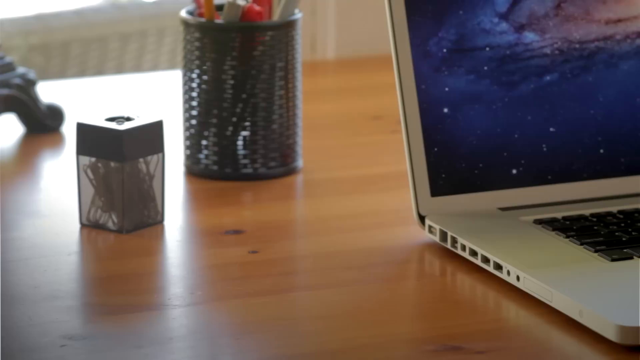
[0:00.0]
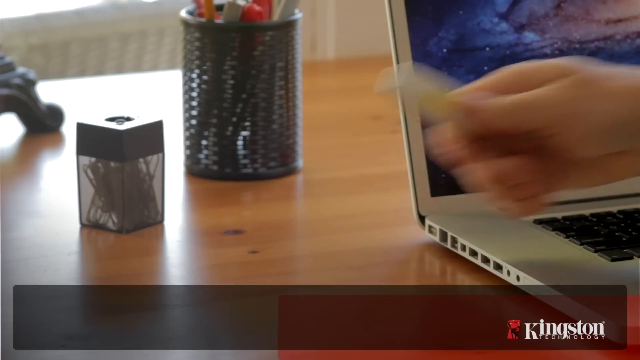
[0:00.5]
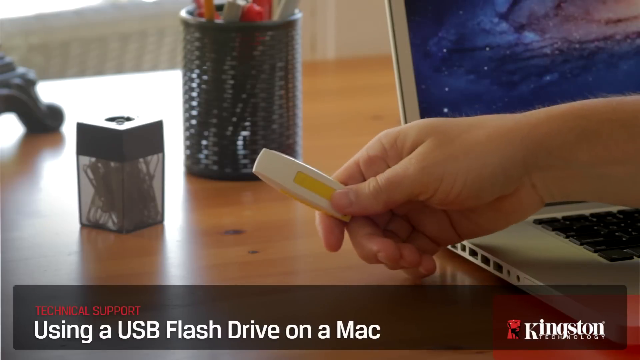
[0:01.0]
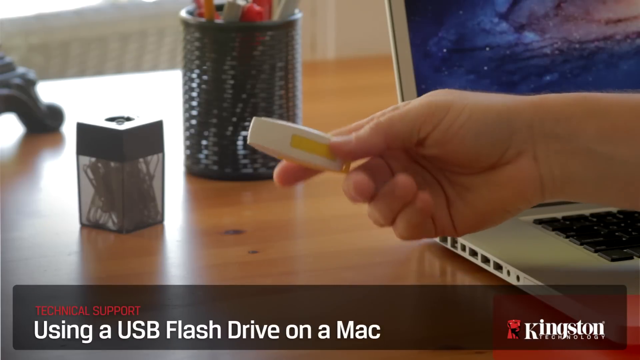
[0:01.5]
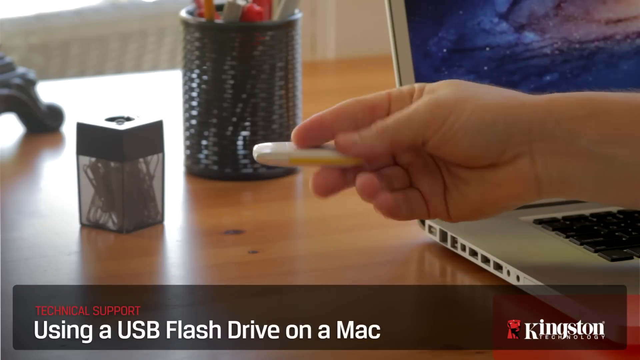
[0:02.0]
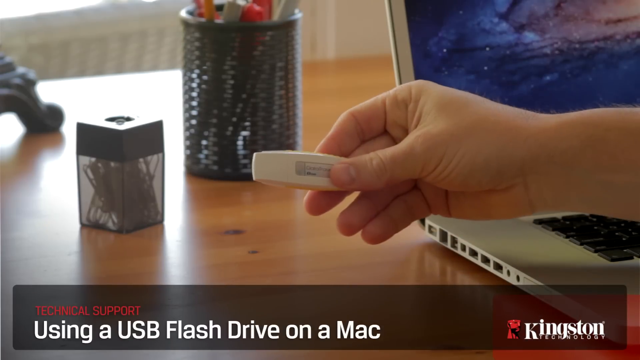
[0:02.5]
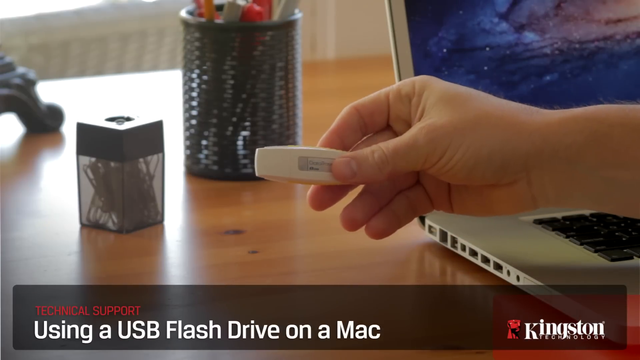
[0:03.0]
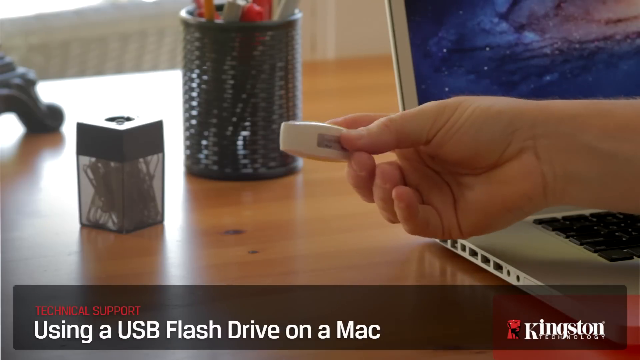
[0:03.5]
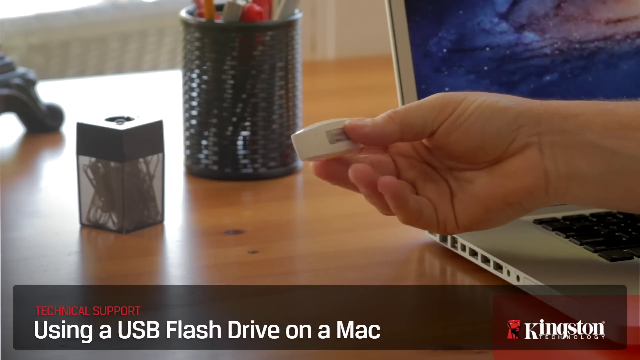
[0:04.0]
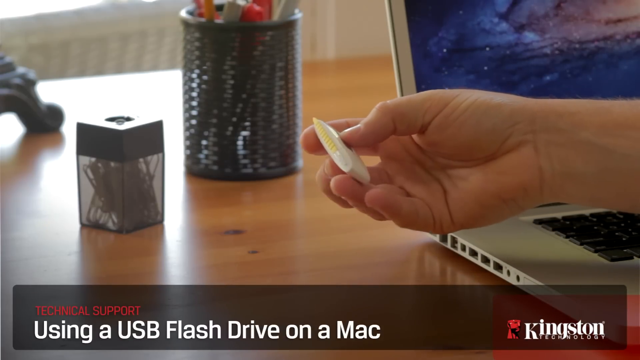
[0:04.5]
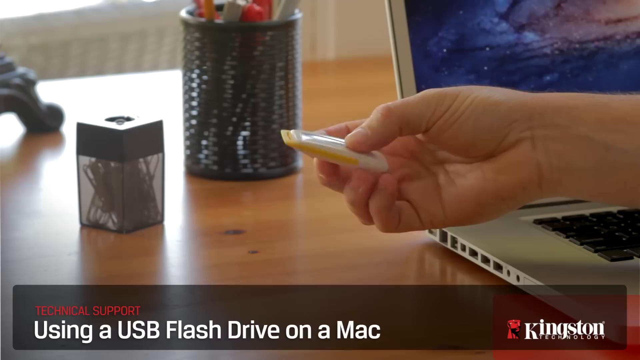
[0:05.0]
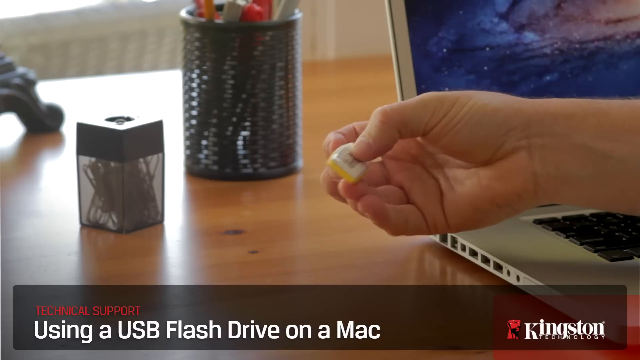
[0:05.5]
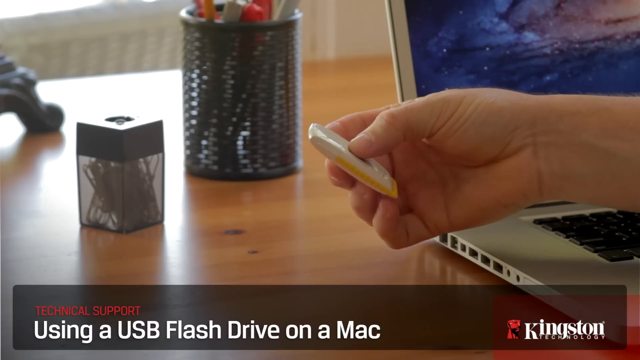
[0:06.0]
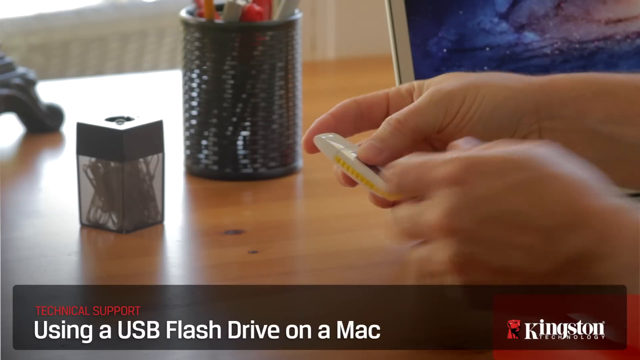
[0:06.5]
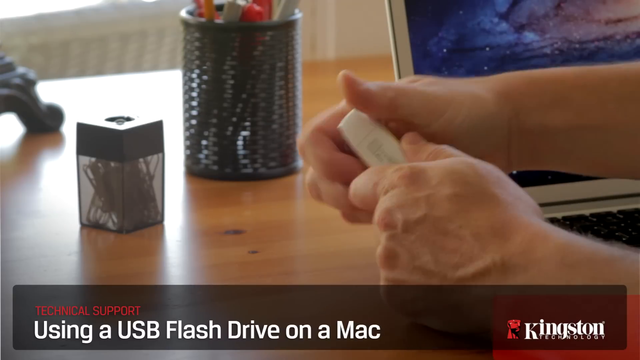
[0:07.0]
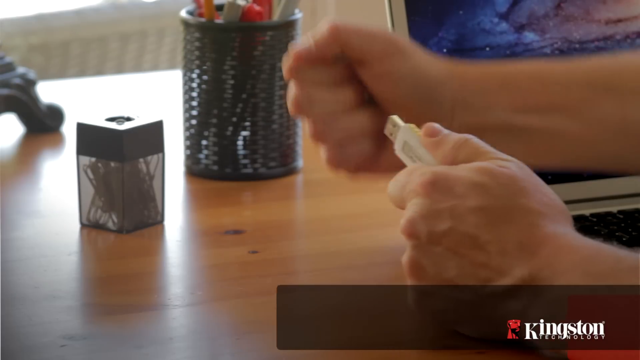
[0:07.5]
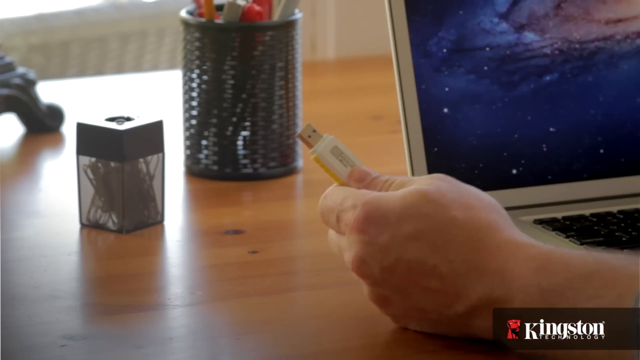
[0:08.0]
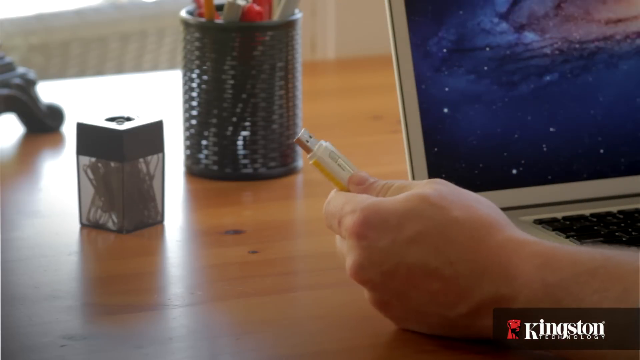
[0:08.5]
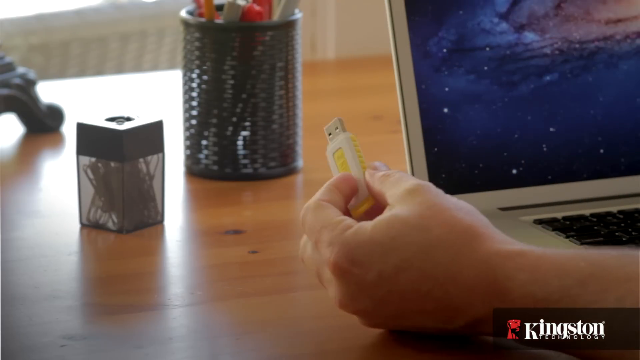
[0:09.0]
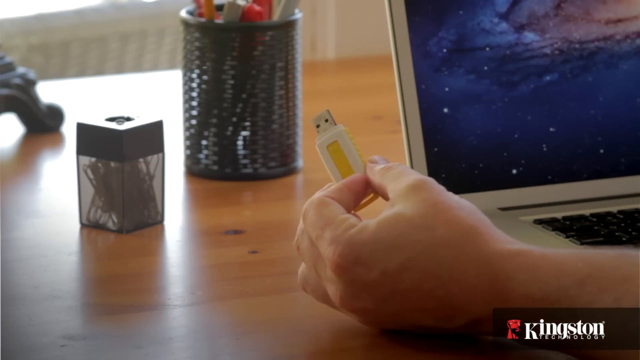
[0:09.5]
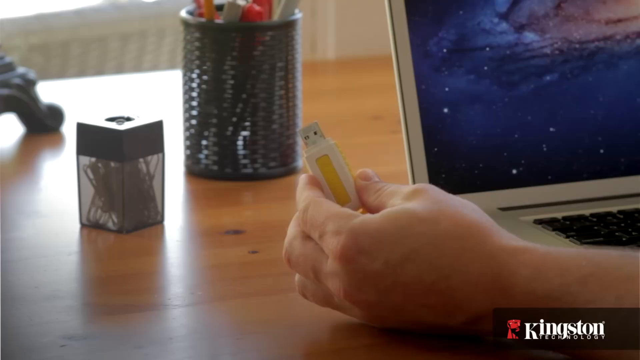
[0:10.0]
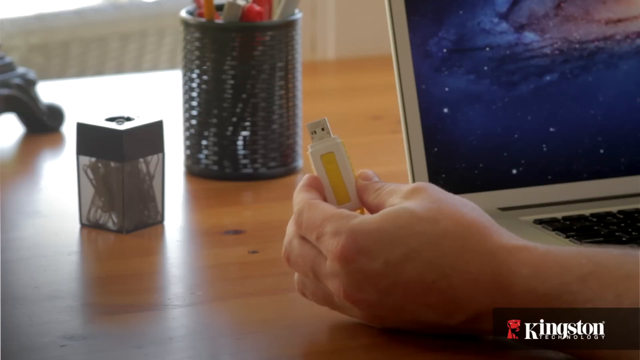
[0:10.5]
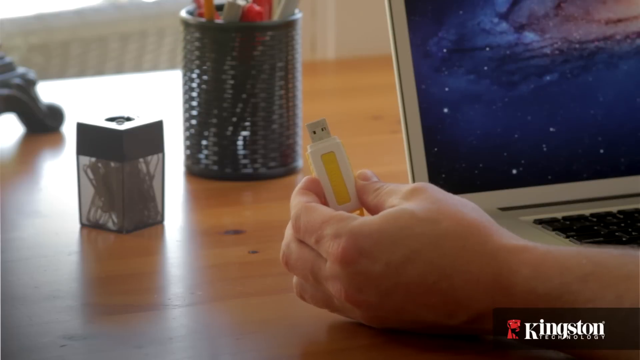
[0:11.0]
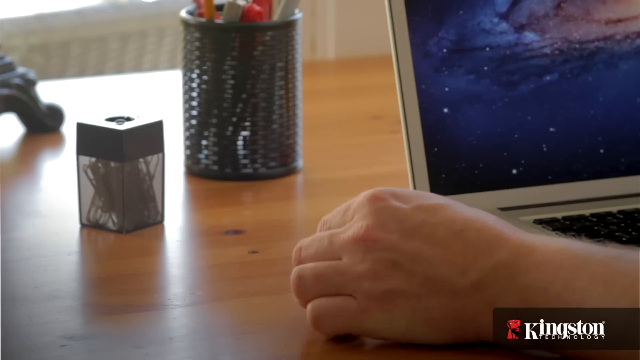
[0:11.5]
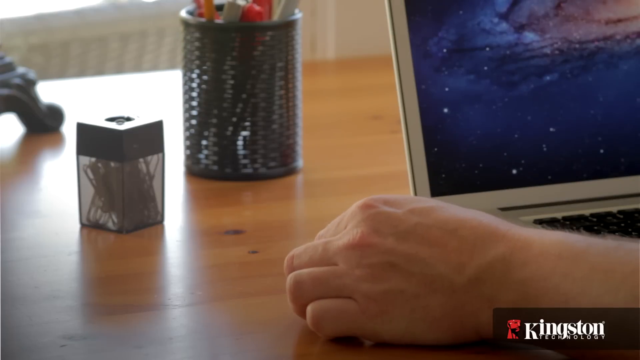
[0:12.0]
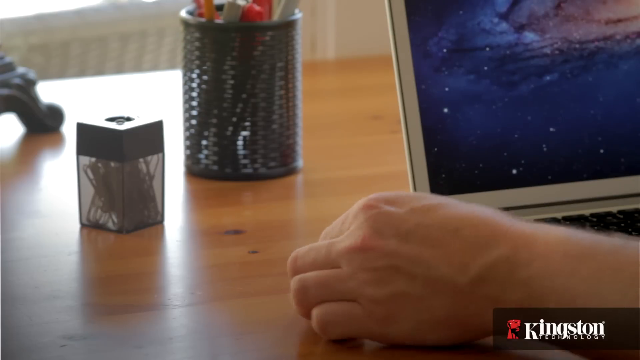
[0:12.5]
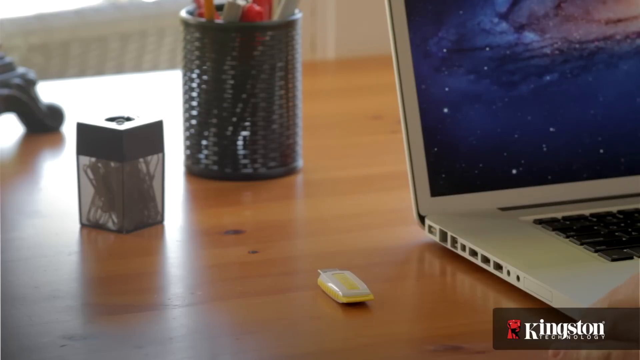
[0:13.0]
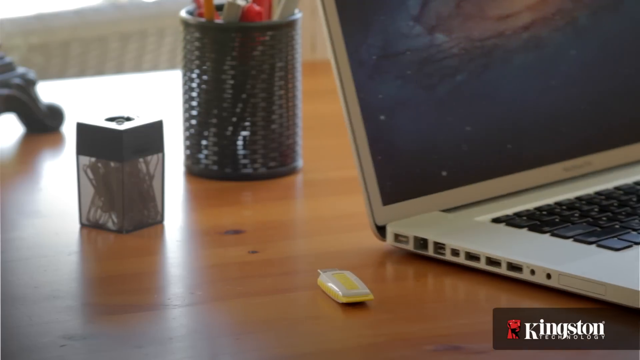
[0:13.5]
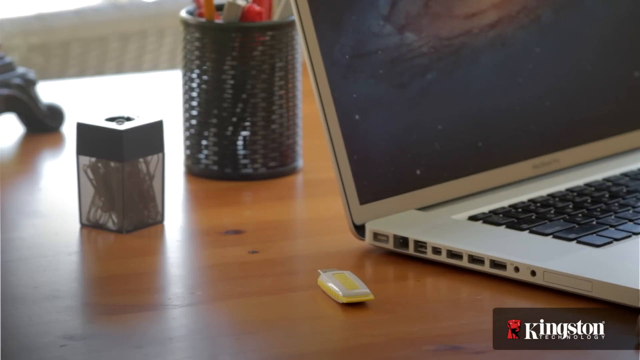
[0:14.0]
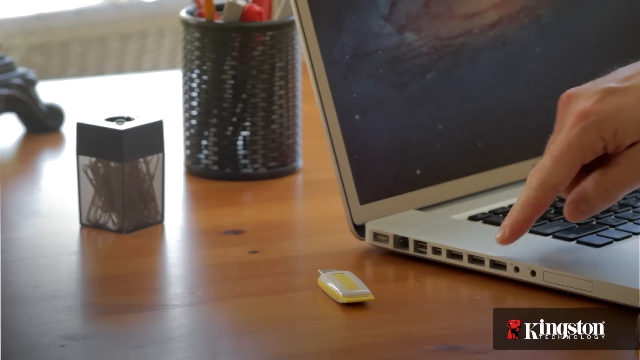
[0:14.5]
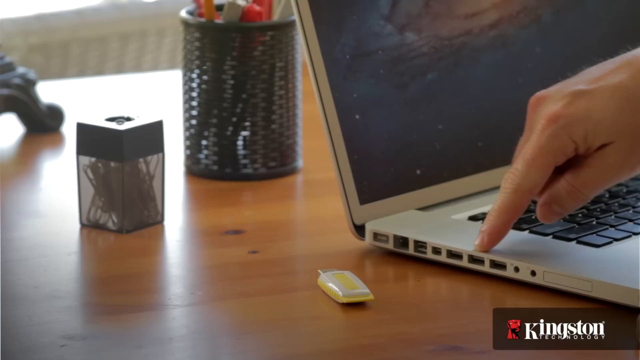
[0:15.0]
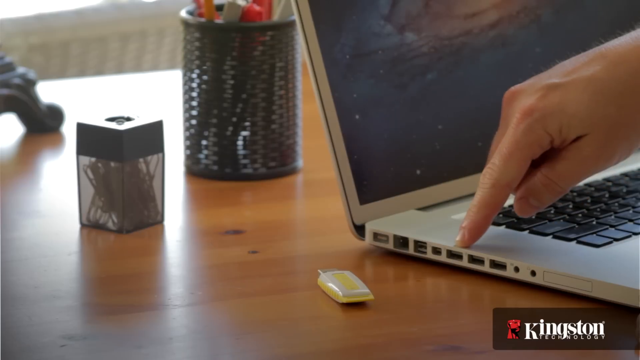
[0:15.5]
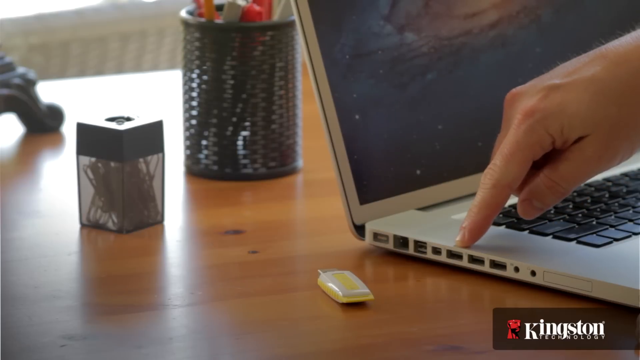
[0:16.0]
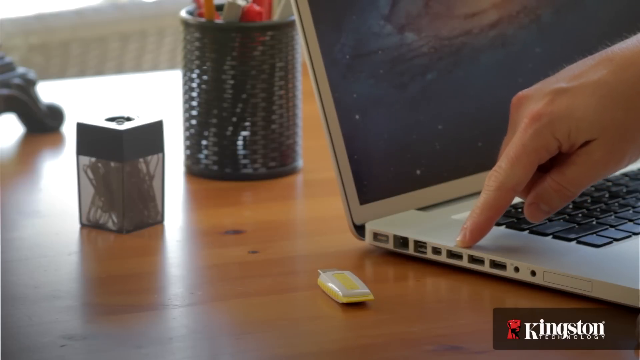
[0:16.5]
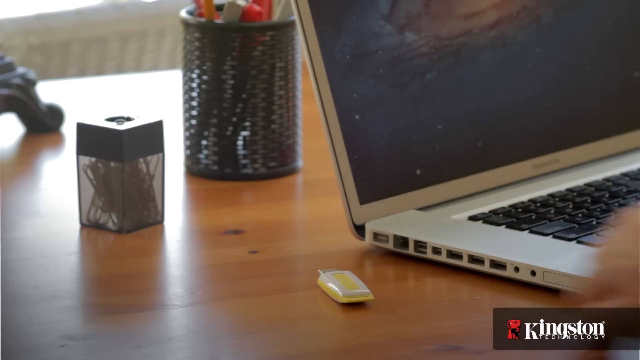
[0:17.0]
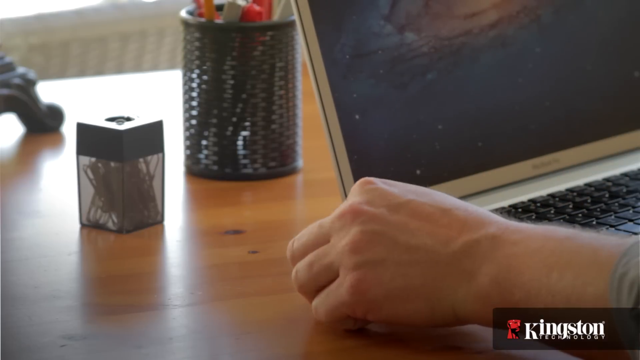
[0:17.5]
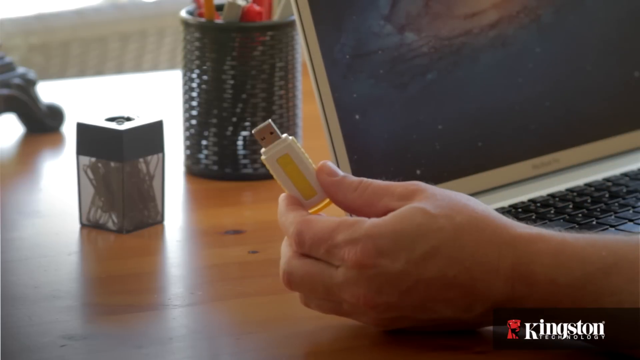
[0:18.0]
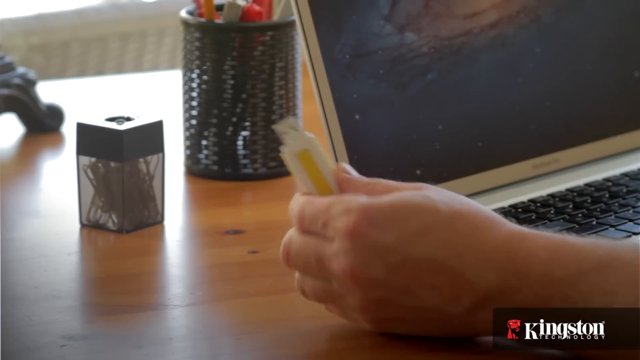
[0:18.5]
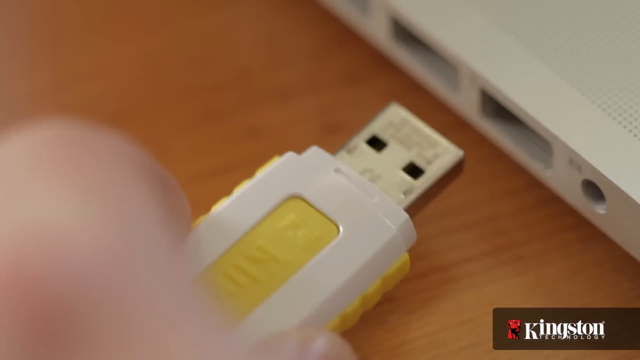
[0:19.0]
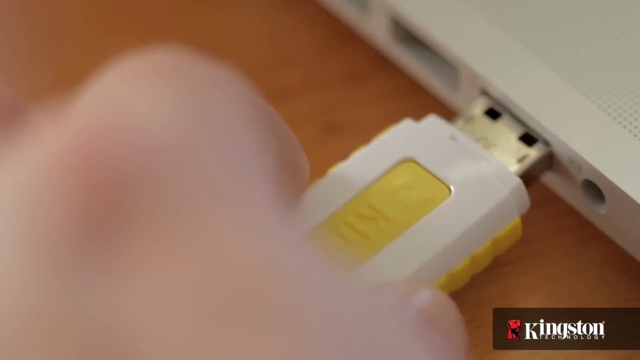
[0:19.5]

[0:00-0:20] An oak table is in the background, and on it, in the upper right-hand corner, is a computer screen opened up like a laptop. There is a canister holding pens and markers and a little magnetic container of paperclips. Text pops up on the screen reading "using a USB flash drive on a Mac." Someone demonstrates pushing a flash drive into the slots on the side of the computer; the hand looks like a man's, and the person appears to be Caucasian. The flash drive is white on the outside and yellow on the inside portion. The person pulls the adapter part of the flash drive out so it can go into the computer, points with his fingers at the three slots on the side, then picks up the USB and pushes it right into the computer.